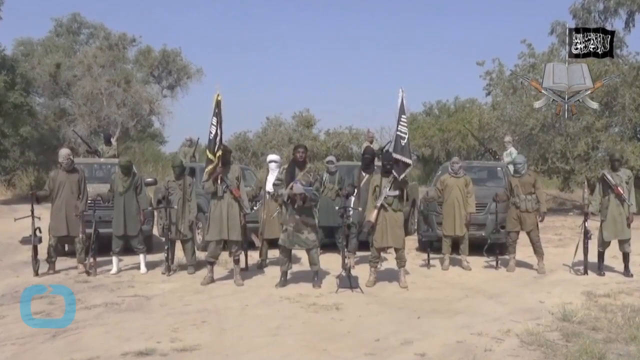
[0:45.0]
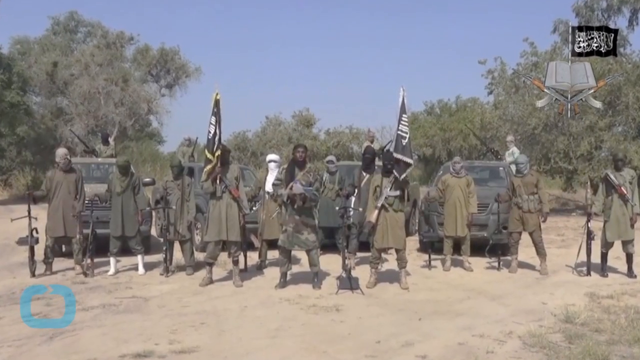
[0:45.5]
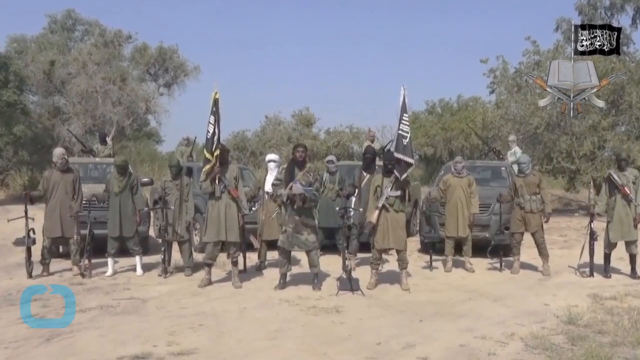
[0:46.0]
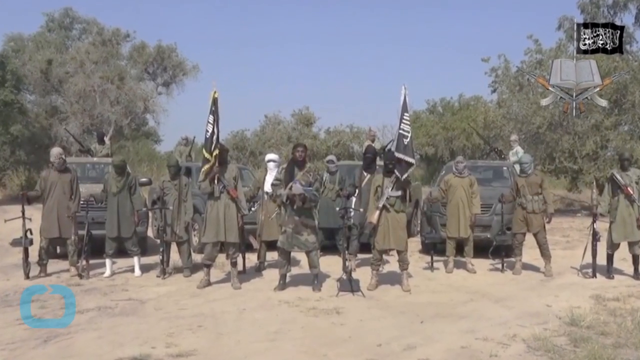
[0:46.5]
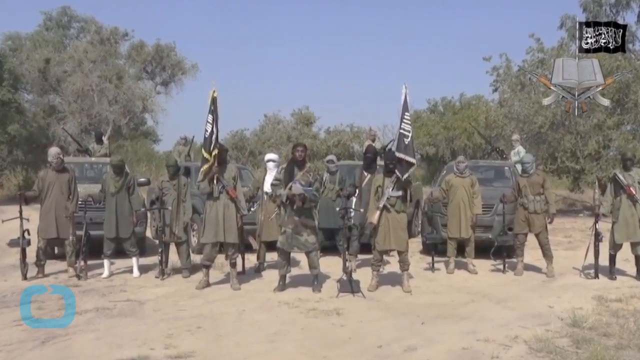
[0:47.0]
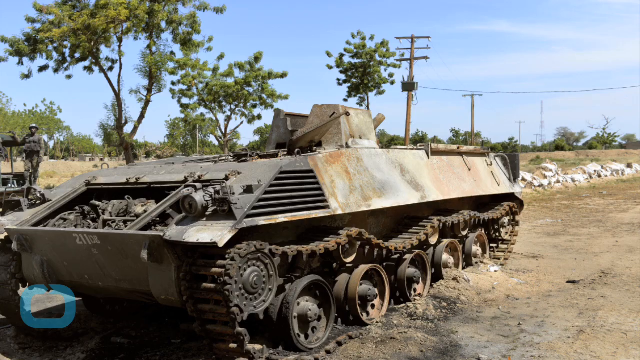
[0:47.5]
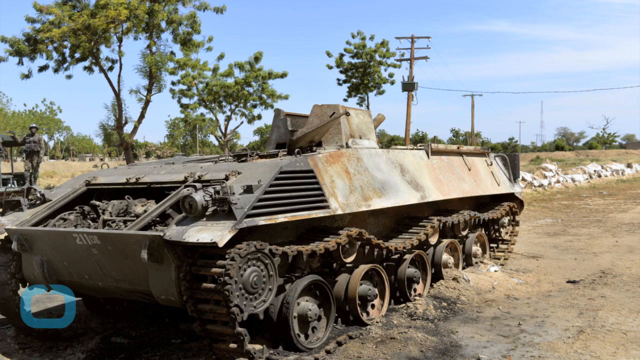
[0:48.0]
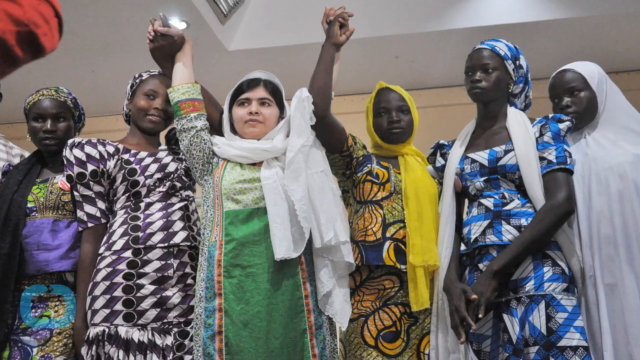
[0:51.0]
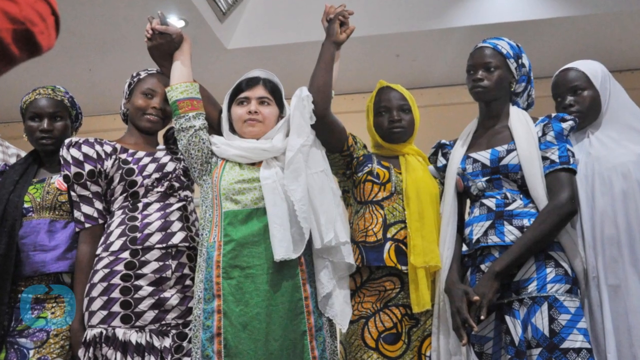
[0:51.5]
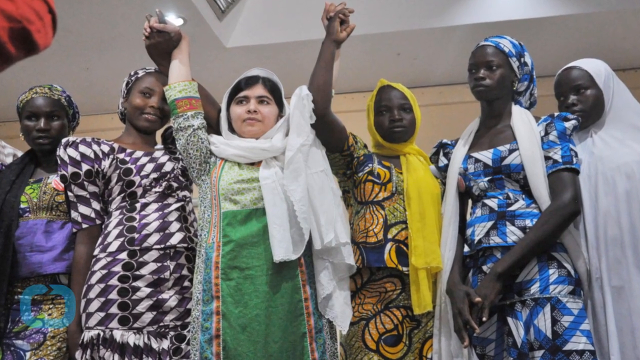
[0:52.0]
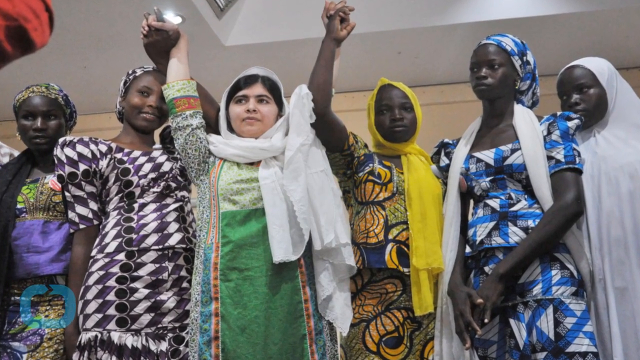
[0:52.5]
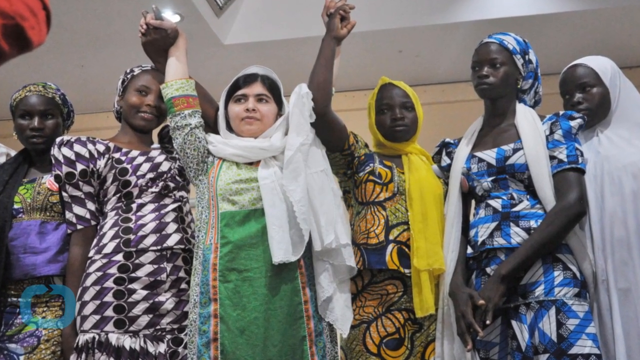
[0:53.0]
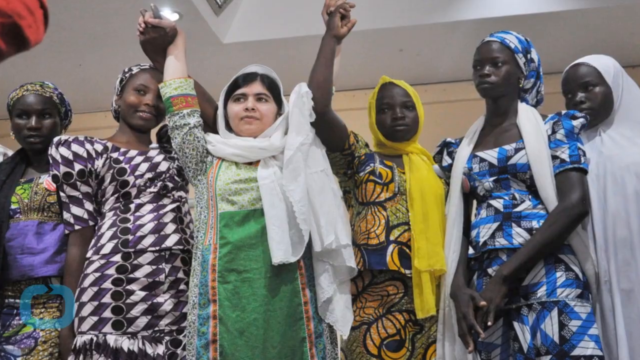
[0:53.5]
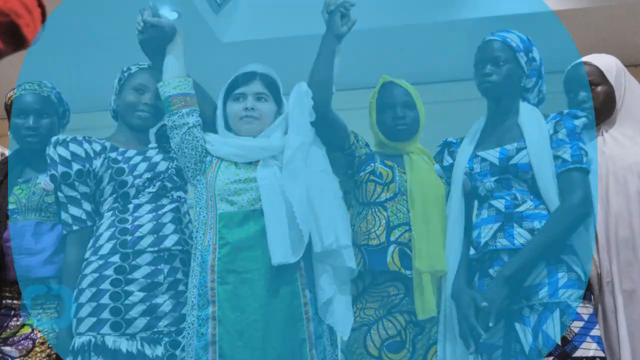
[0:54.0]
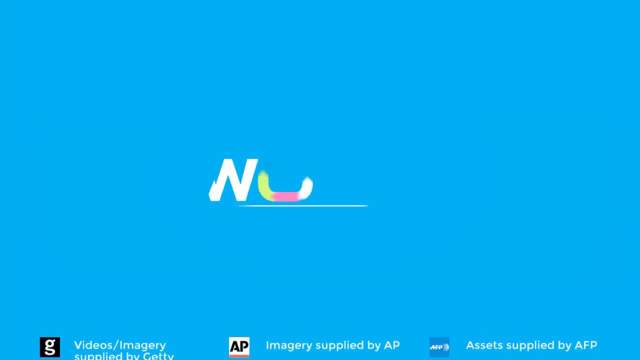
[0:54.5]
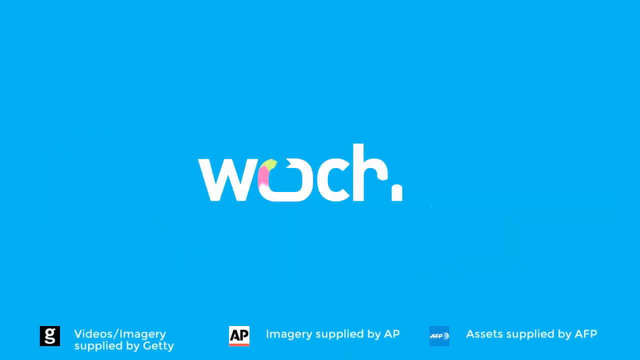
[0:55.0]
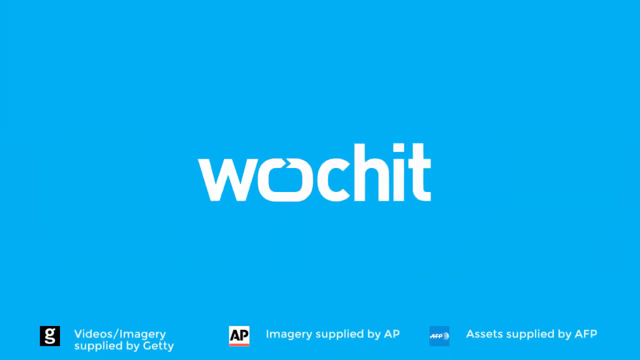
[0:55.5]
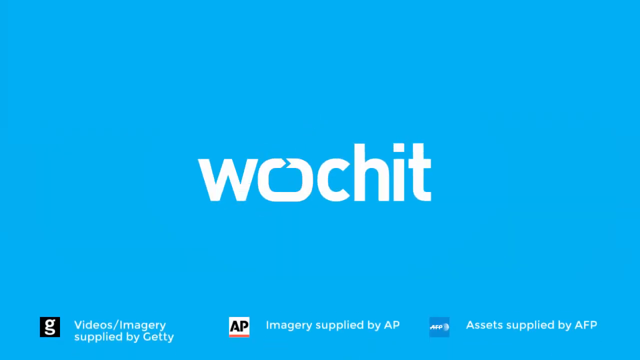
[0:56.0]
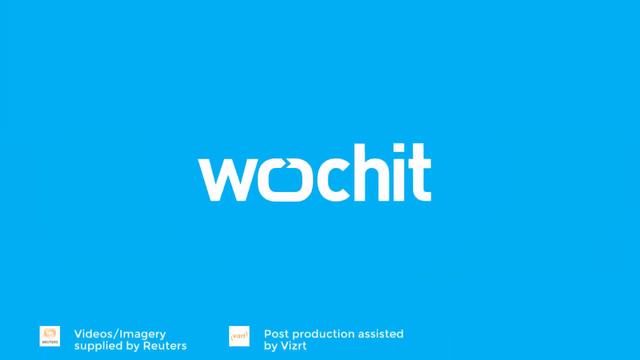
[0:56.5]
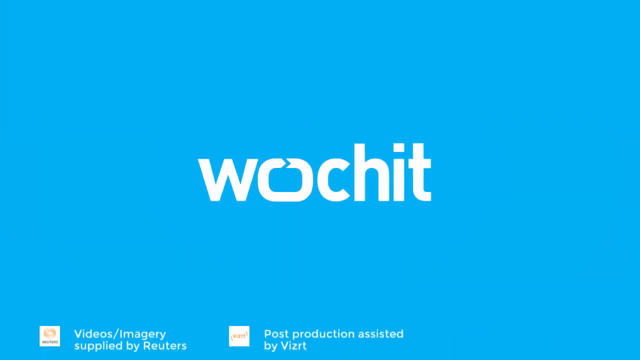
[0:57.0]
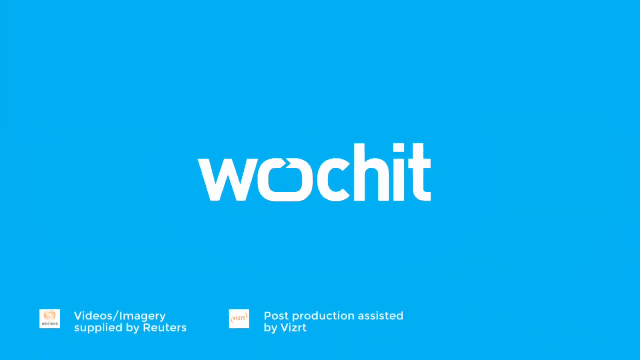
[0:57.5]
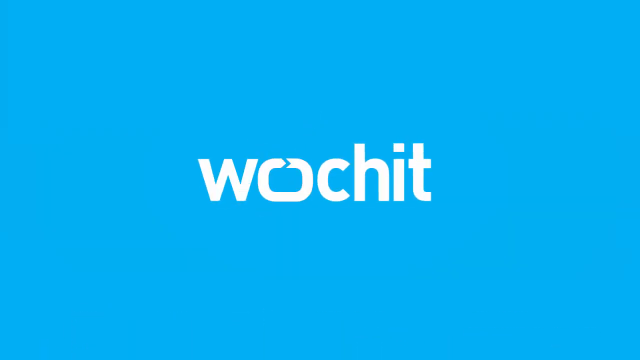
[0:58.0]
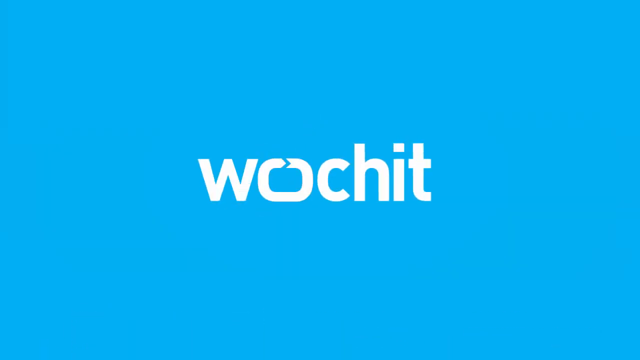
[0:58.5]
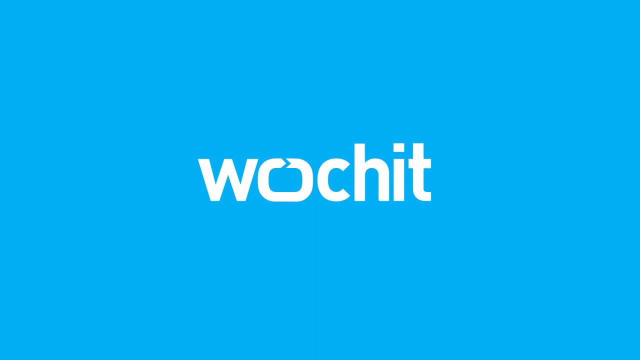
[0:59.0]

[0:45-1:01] A group of soldiers, seemingly including some of the initial group with more around them, hold a couple of flags. Vehicles have guns mounted on top. The disabled tank is shown. About six women appear, a few holding their hands up almost like a victory gesture; they do not look sad, and what they are doing is unclear. The news sponsor's name, "WOCHIT," is then on the screen. It is a clear day in a dry, sparse place. The country of the flags cannot be made out.